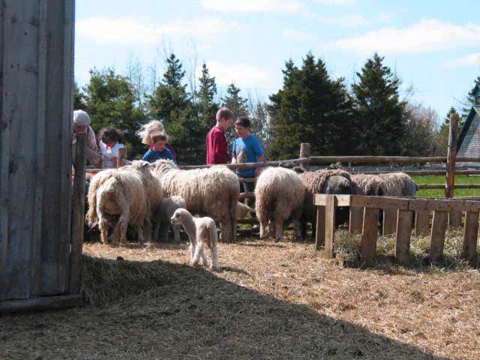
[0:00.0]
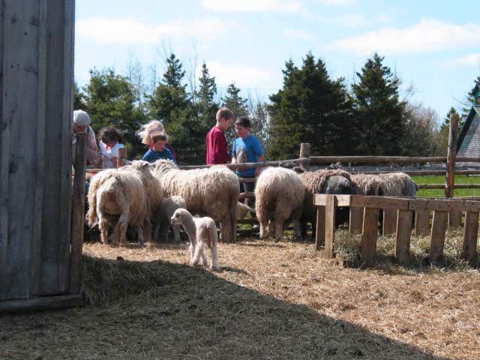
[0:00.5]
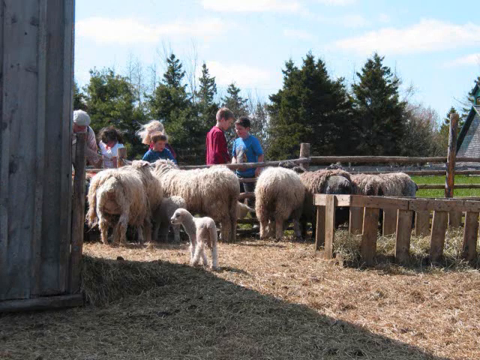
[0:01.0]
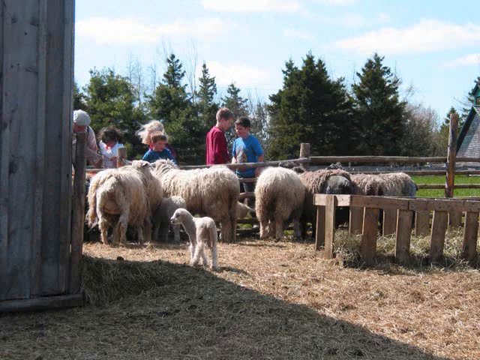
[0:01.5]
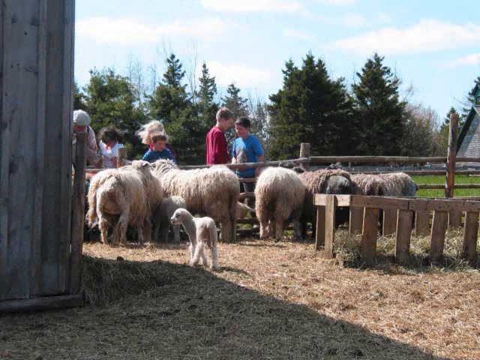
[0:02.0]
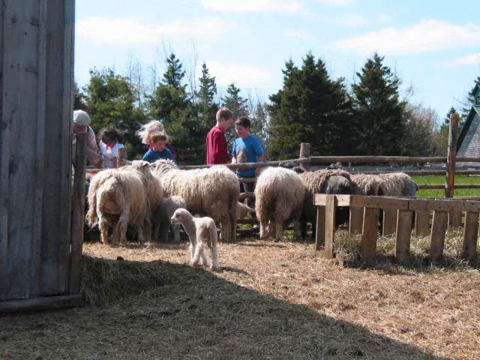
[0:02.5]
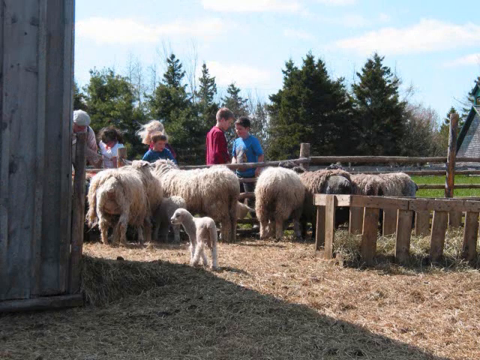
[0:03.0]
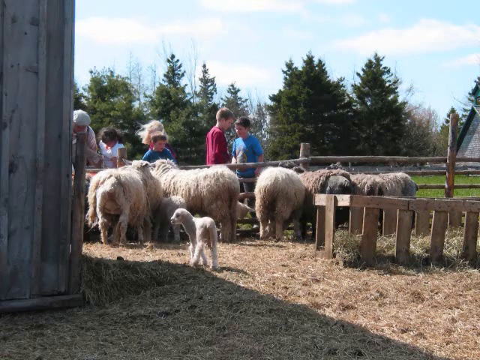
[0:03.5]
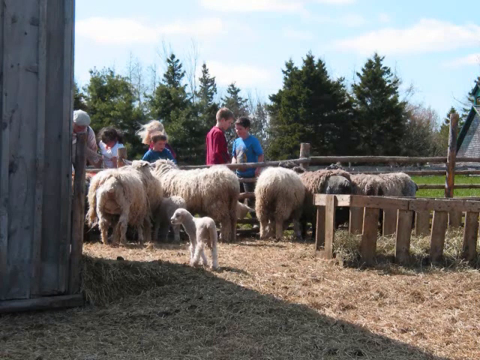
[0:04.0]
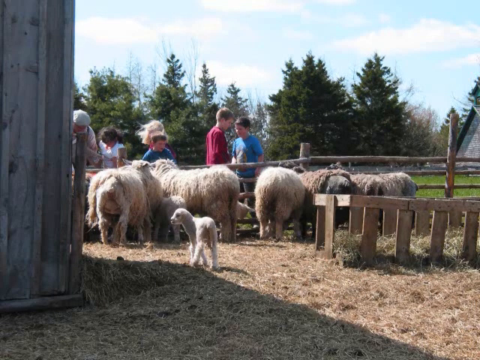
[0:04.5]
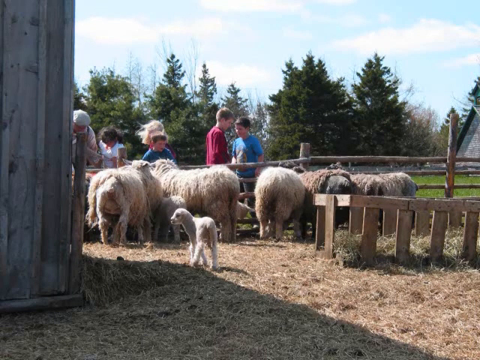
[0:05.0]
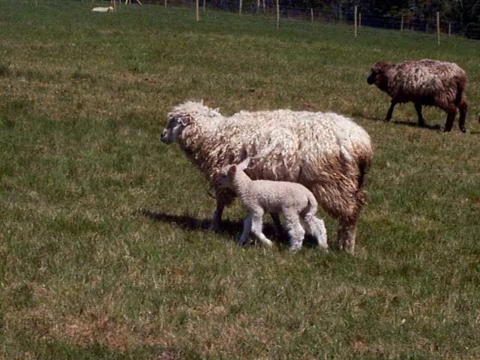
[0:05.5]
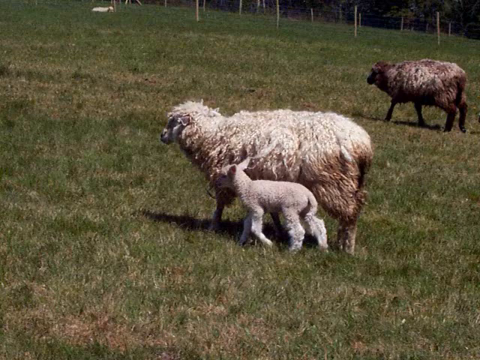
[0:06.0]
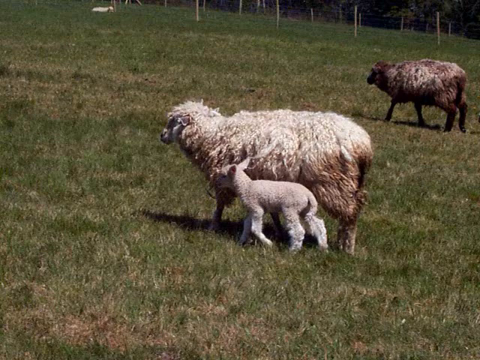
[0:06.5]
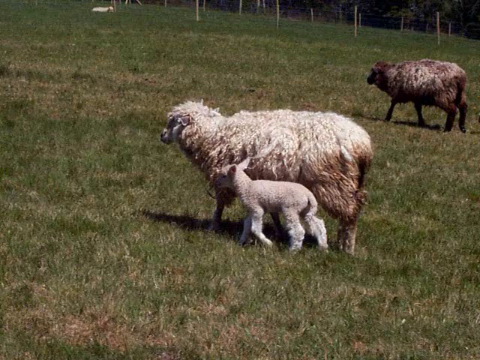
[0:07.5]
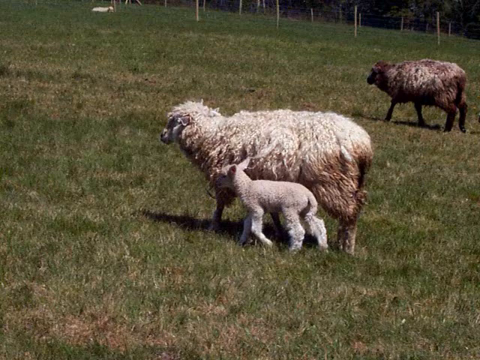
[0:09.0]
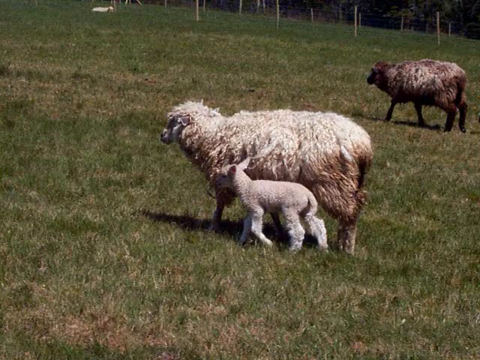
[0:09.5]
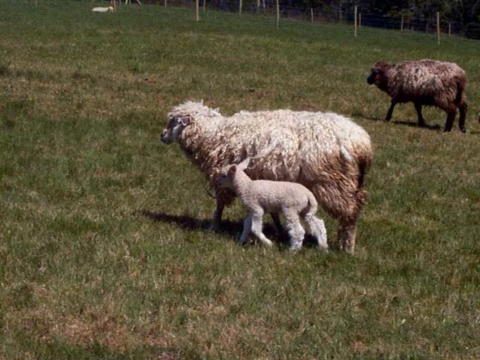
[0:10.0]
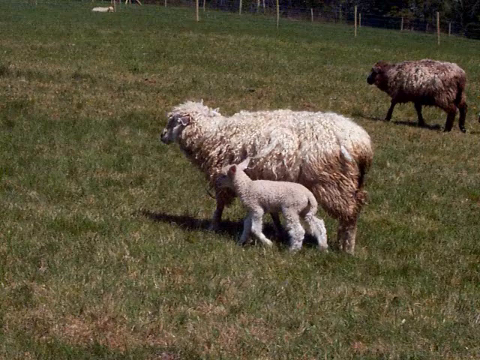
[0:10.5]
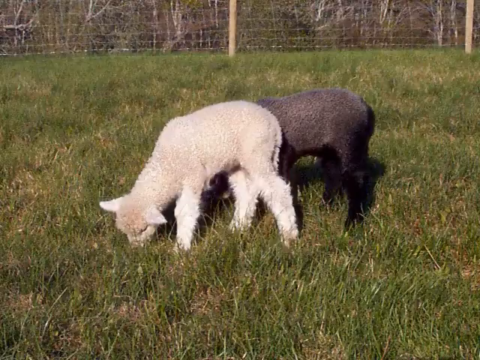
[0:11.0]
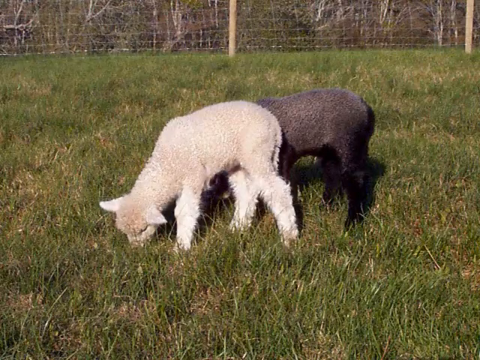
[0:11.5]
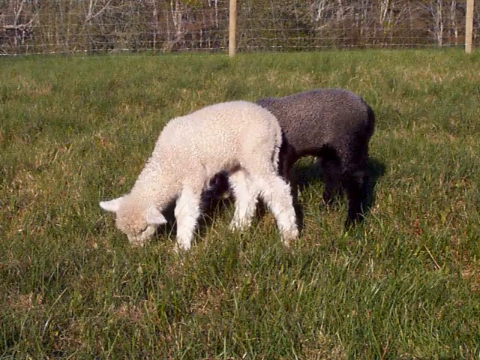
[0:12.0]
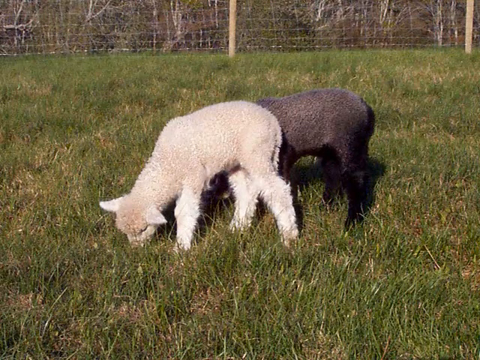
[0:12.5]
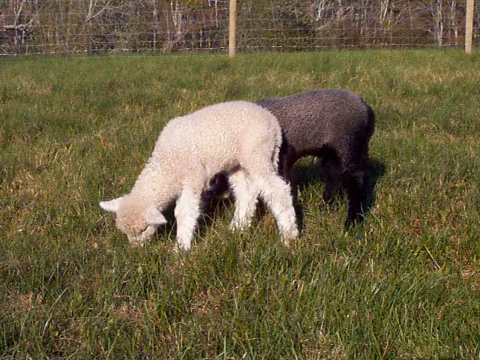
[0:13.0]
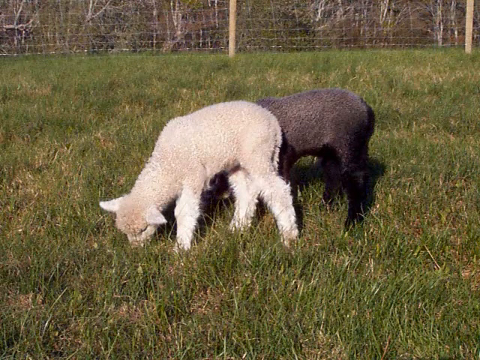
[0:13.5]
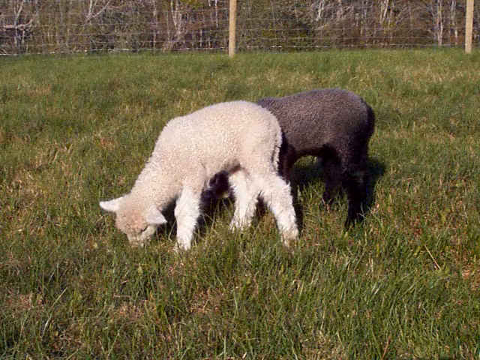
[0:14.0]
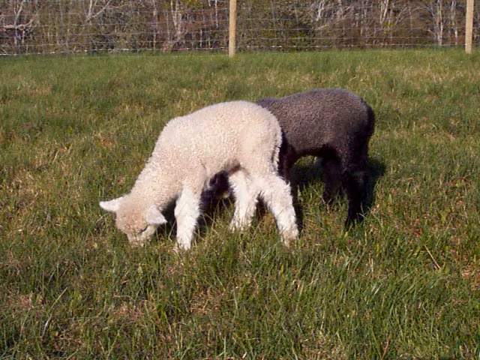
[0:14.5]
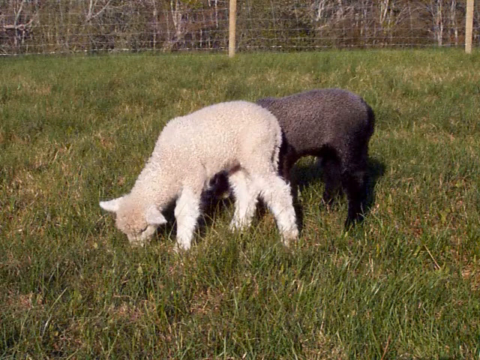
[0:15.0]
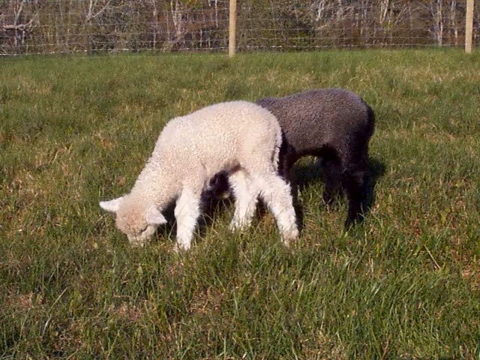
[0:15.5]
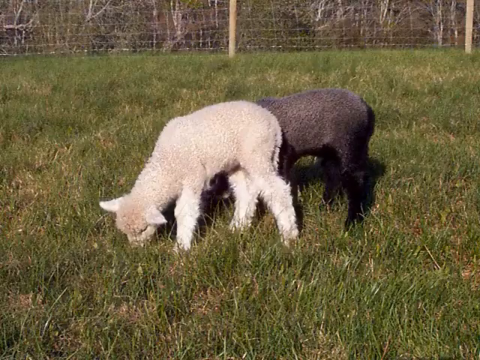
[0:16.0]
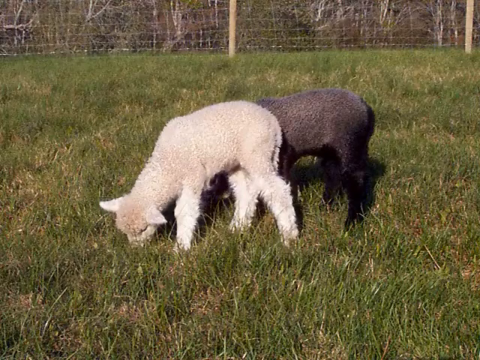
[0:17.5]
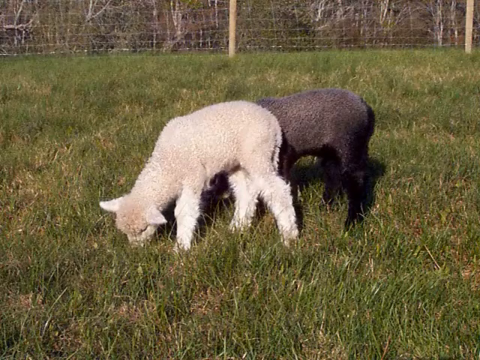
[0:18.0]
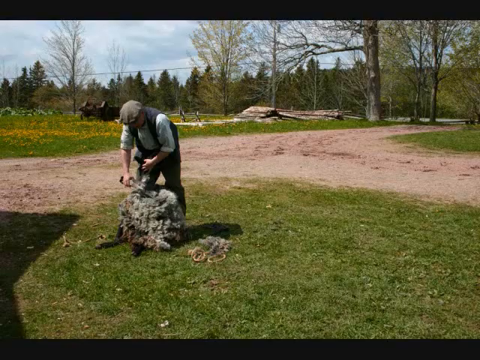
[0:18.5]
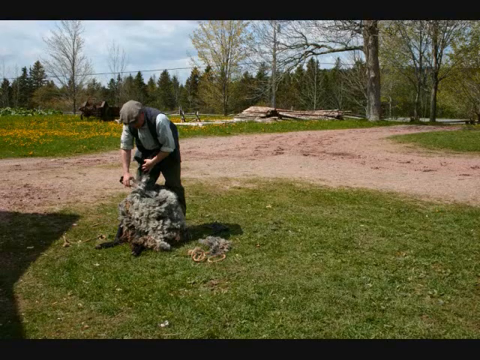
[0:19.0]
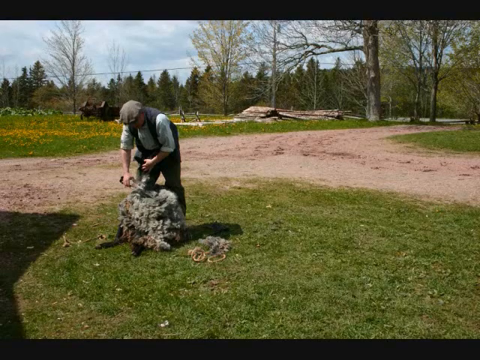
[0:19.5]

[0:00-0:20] The video opens with a still picture of children gathered around a wooden partitioned fence indoors, which holds animals with lots of wool that look to be sheep, lambs or goats; they are indeed sheep. Next is a picture of a mother sheep with a baby lamb in a green field. The mother has very thick wool that has turned brown at the bottom, around the legs and backside, maybe from mud or dirt. Then two baby lambs appear, one white and one black, and both appear to have been sheared. Next is a picture of a man in older-looking Scottish attire: a hat that looks Scottish, a dark vest, a lighter shirt with rolled-up sleeves, and dark pants. He has a sheep on its side and is using his right hand to shear it.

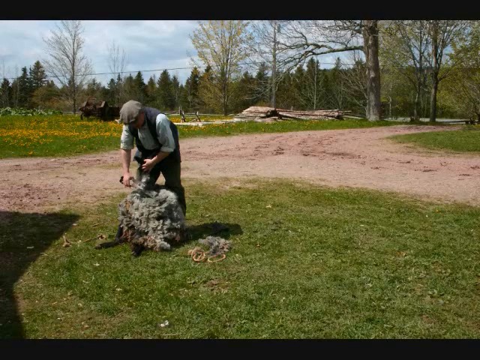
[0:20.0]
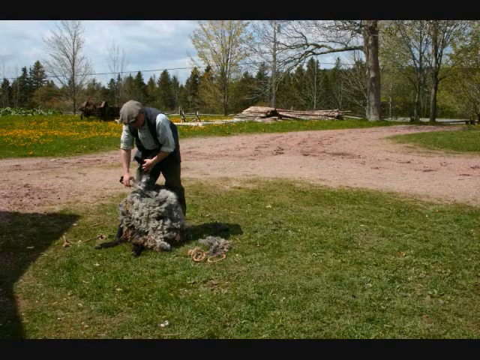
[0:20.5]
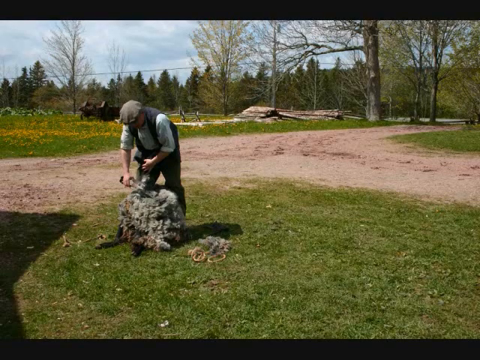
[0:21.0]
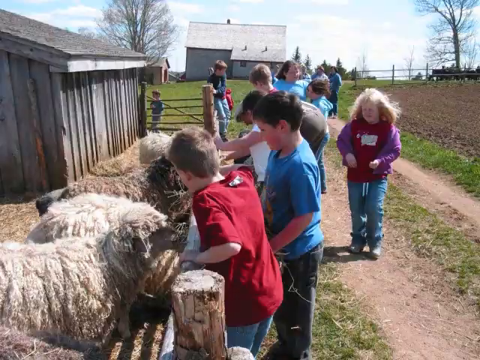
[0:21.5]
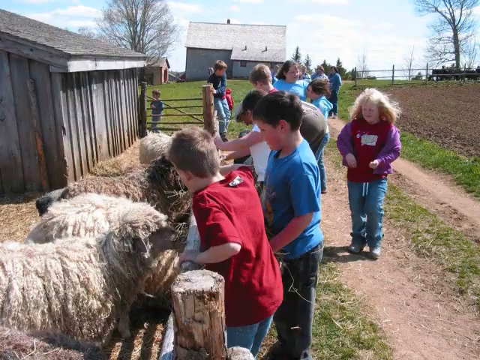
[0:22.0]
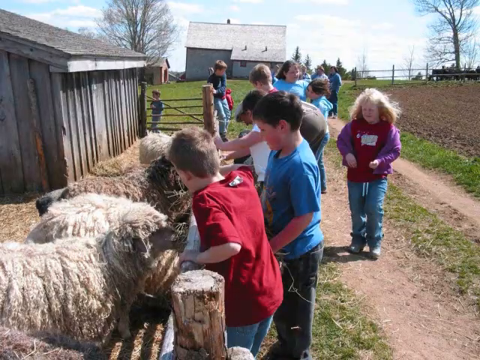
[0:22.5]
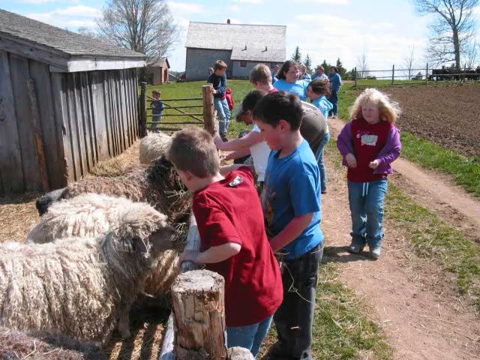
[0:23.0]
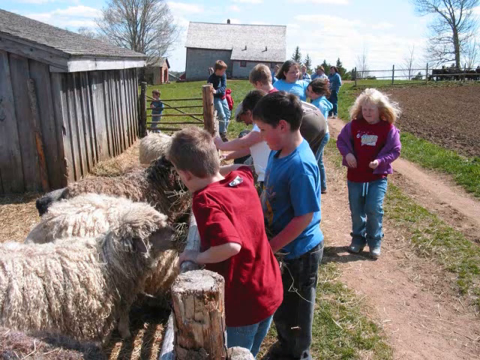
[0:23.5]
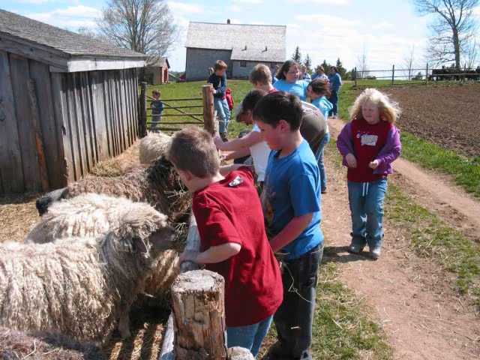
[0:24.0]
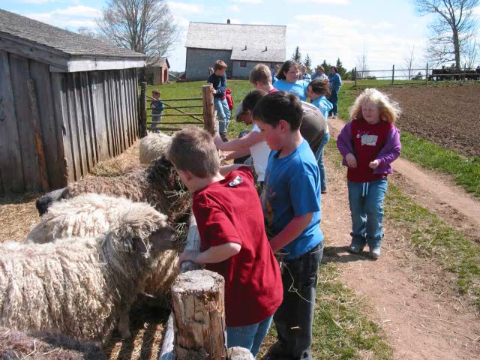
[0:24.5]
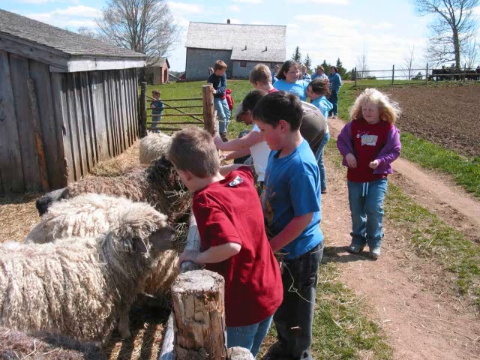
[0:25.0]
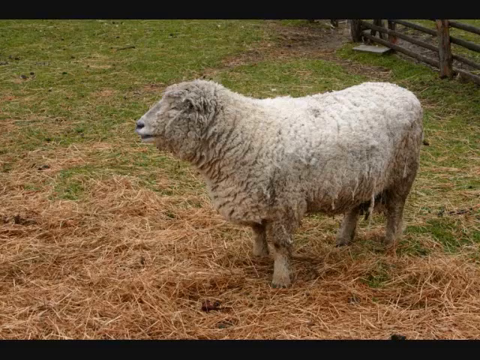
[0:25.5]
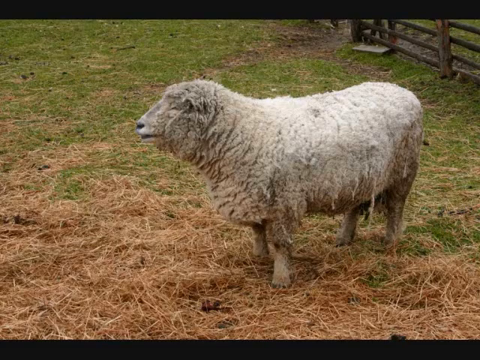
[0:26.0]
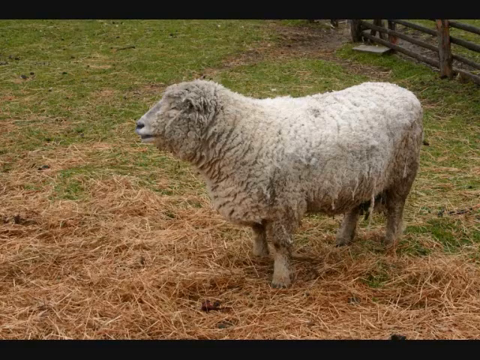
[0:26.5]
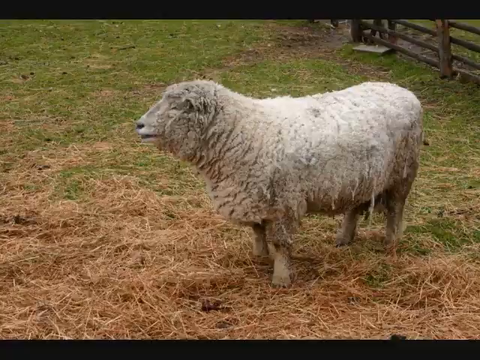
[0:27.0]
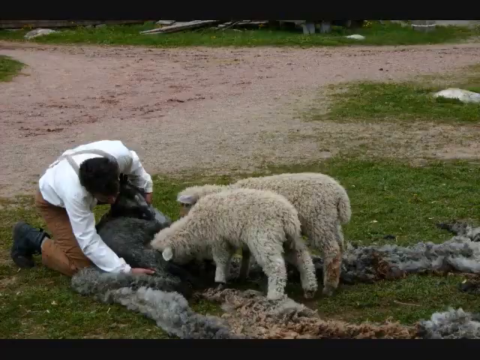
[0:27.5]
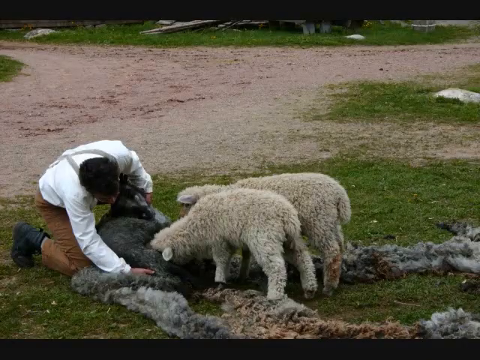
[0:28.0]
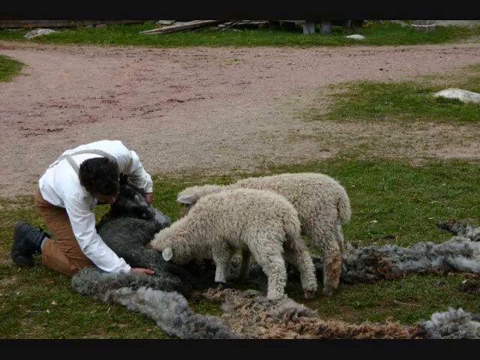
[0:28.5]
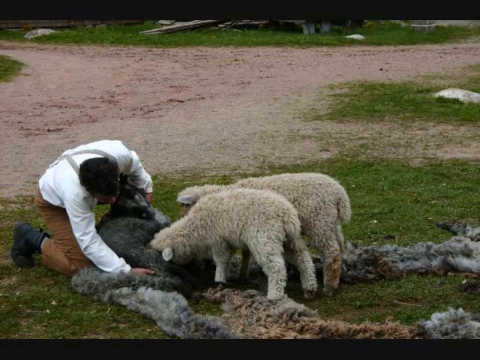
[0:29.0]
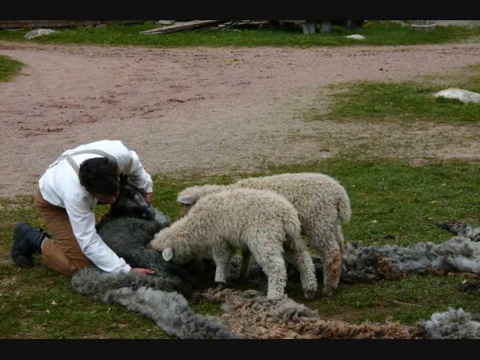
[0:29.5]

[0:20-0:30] A photograph shows a person dressed in traditional, older Scottish attire from the 1800s or 1900s, with a funny-looking hat, a dark vest, a lighter shirt with rolled-up sleeves, and dark pants. The person has taken a sheep, placed it on its side, and appears to be shearing it.